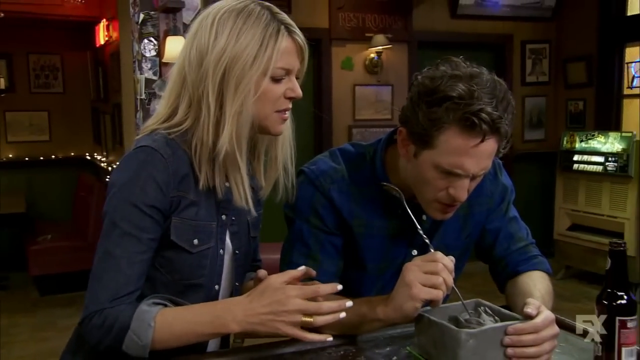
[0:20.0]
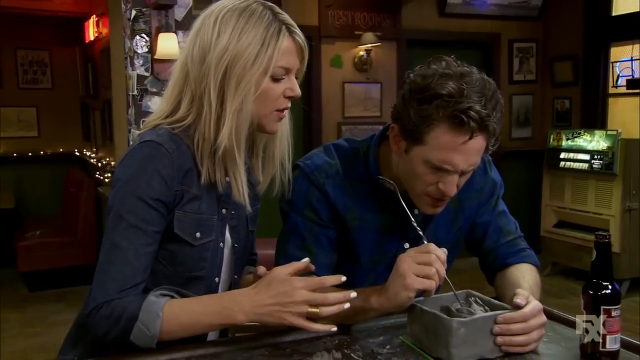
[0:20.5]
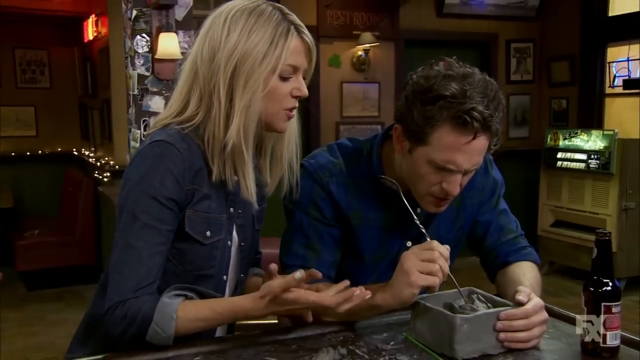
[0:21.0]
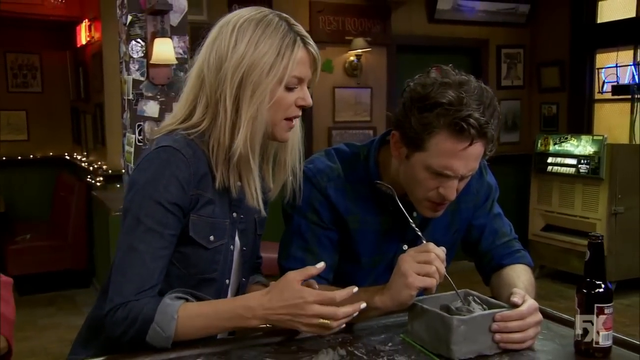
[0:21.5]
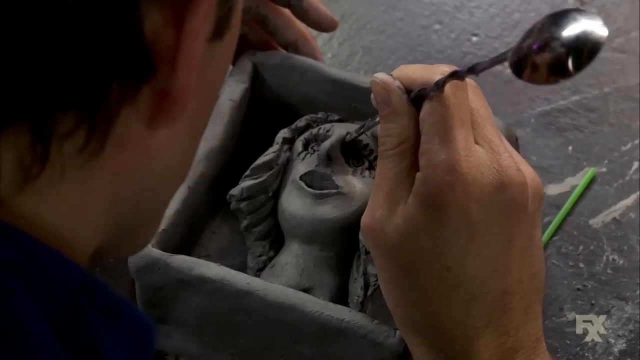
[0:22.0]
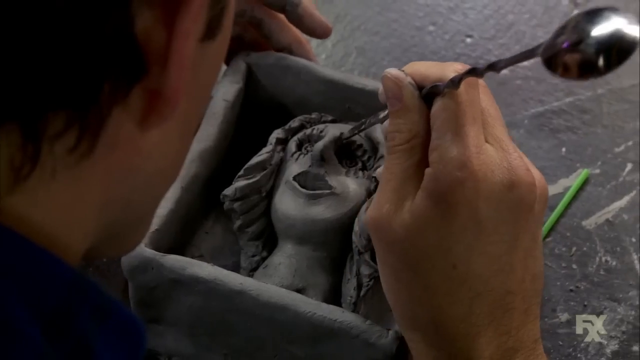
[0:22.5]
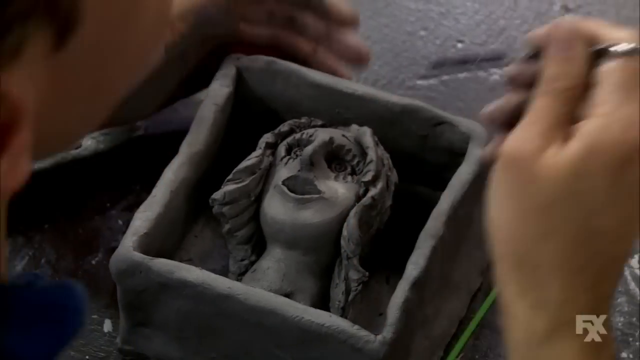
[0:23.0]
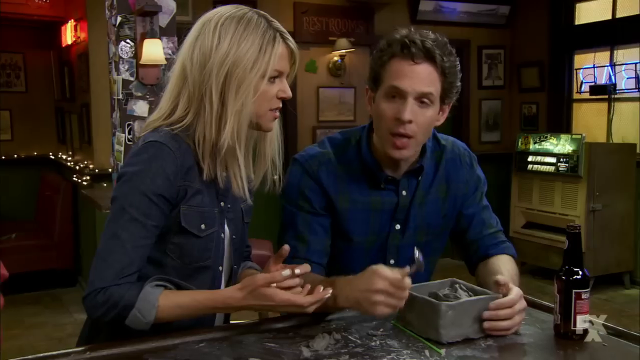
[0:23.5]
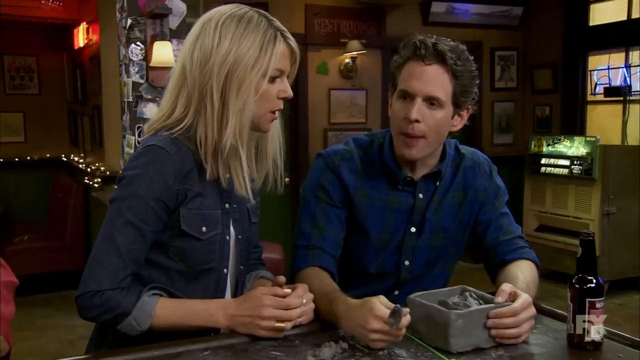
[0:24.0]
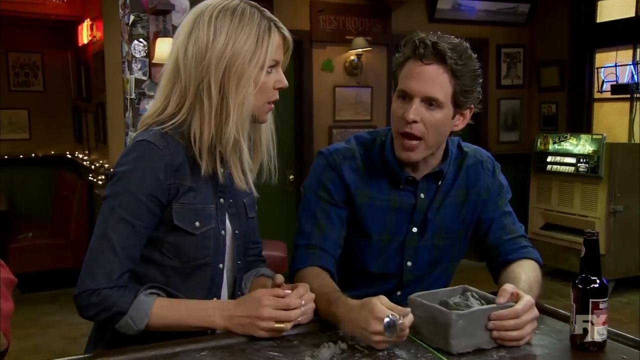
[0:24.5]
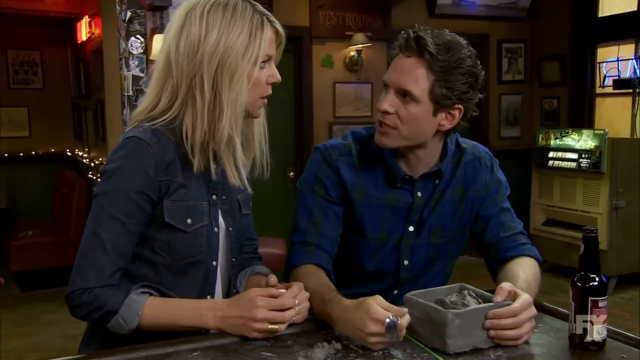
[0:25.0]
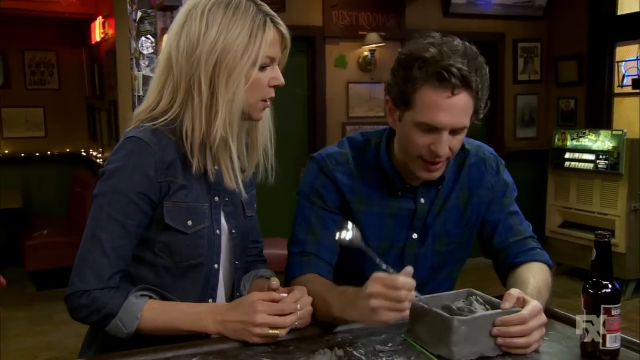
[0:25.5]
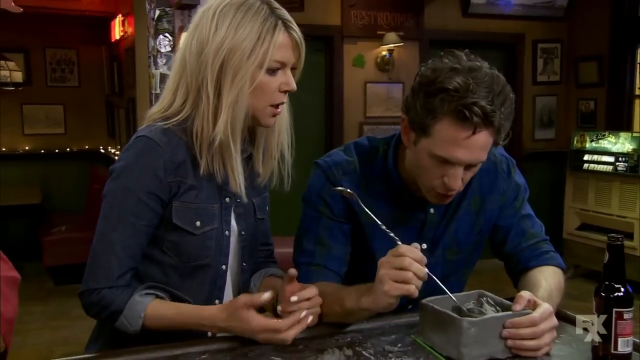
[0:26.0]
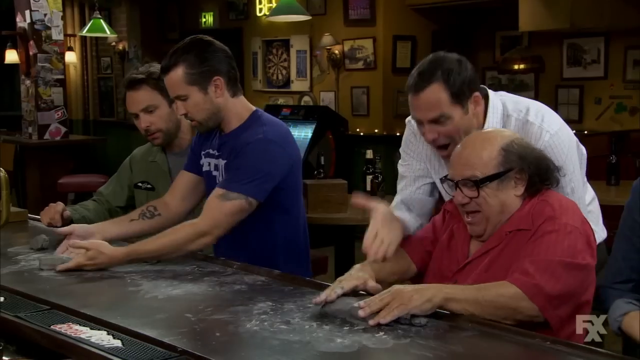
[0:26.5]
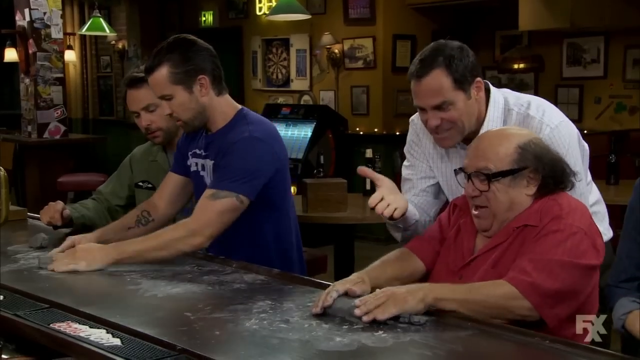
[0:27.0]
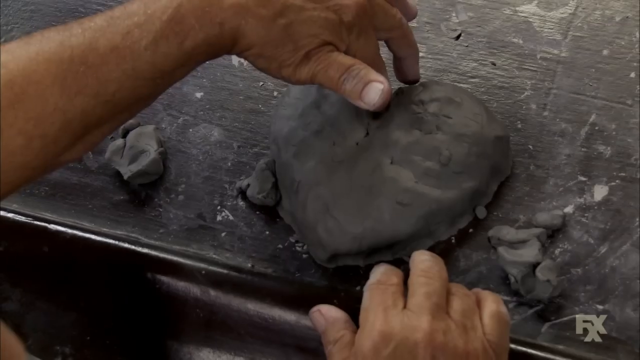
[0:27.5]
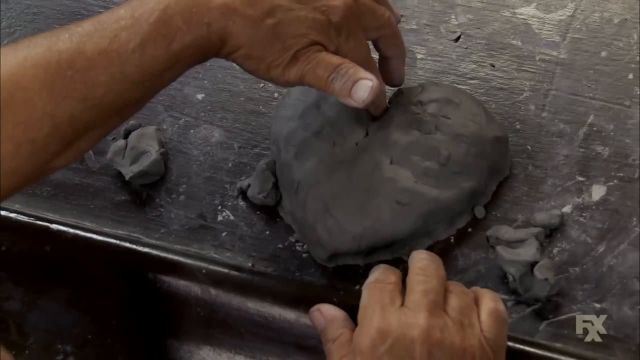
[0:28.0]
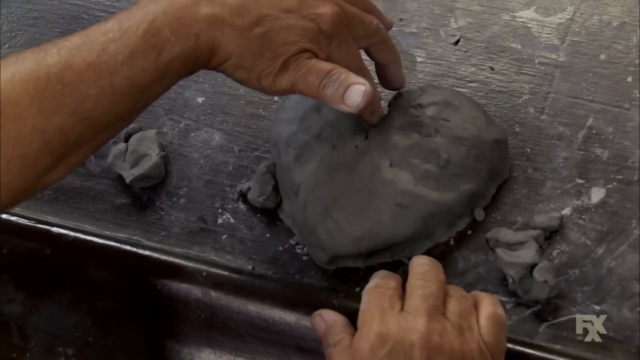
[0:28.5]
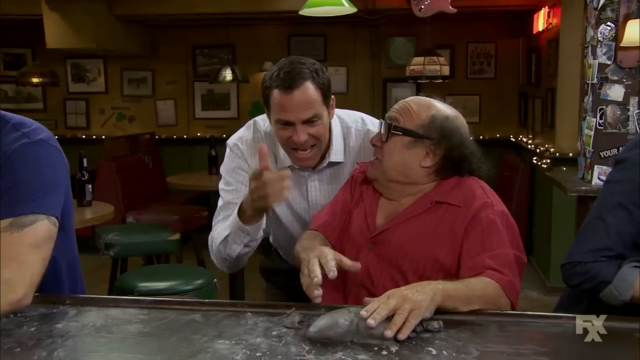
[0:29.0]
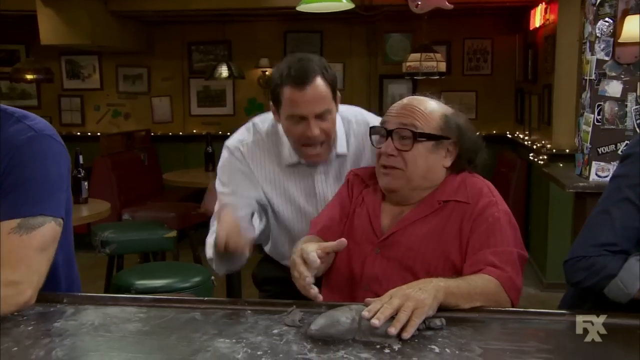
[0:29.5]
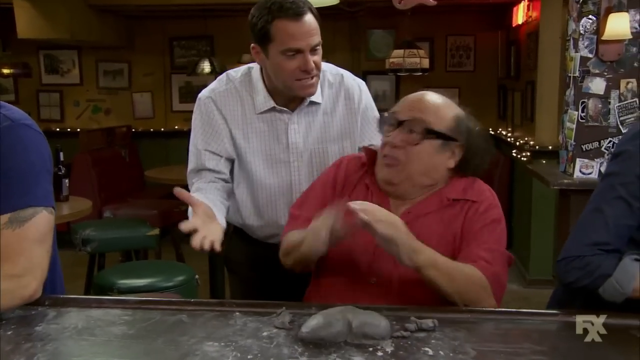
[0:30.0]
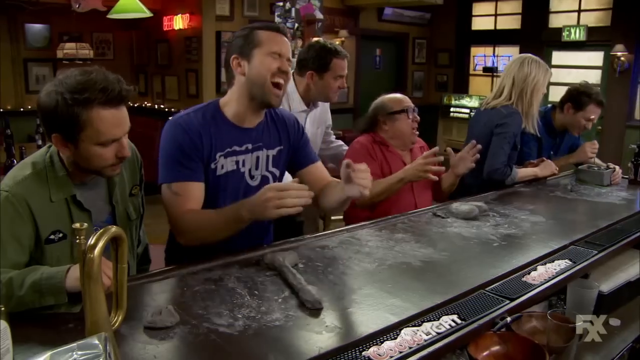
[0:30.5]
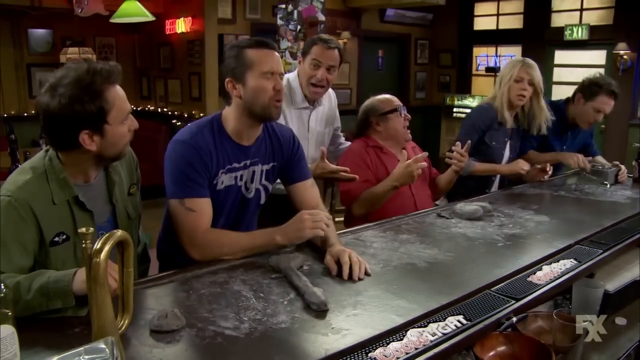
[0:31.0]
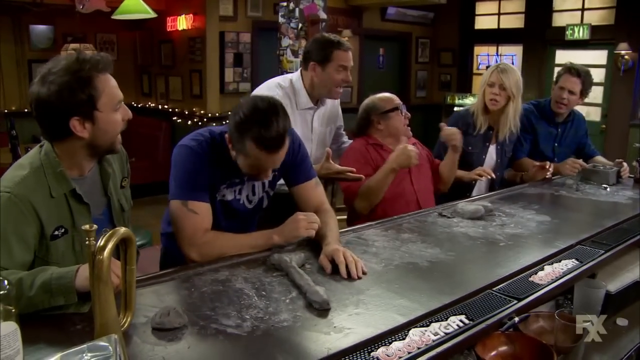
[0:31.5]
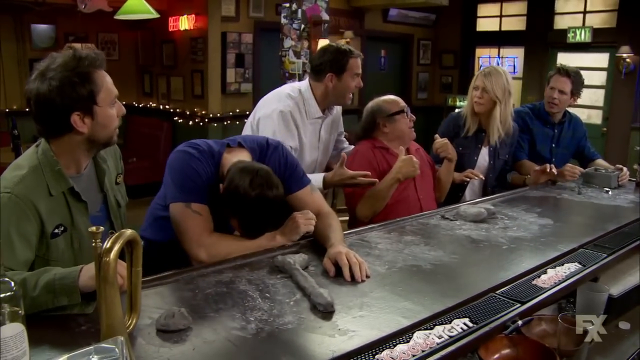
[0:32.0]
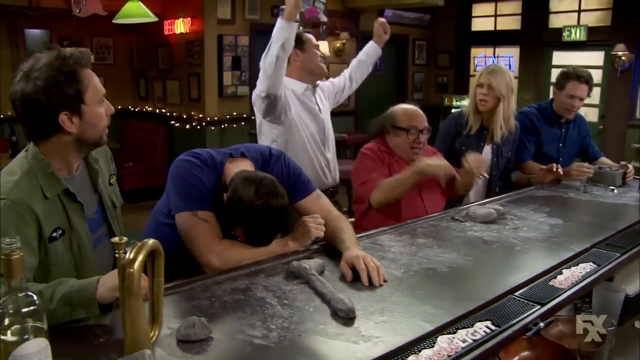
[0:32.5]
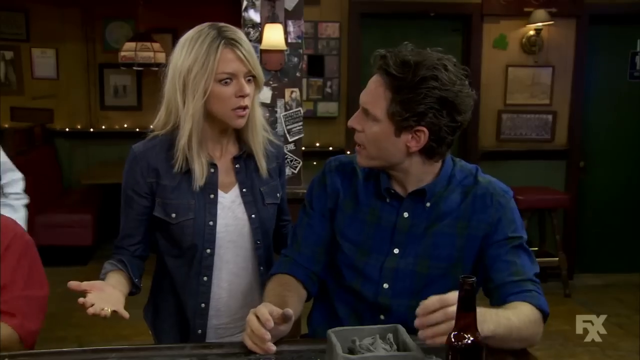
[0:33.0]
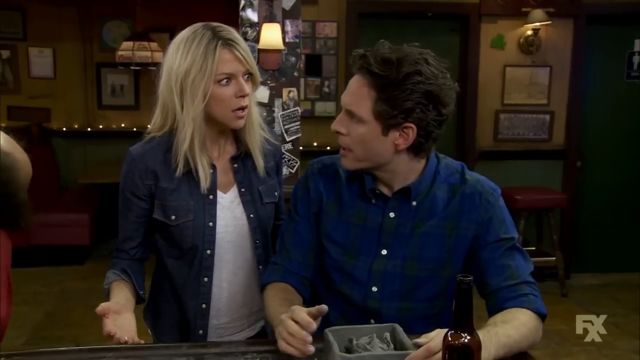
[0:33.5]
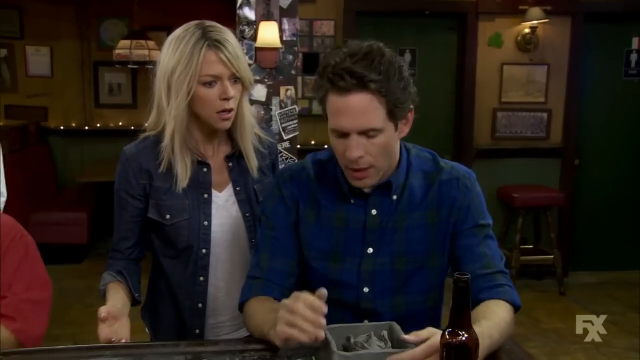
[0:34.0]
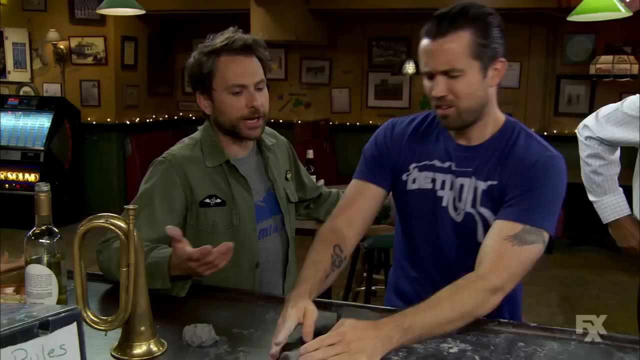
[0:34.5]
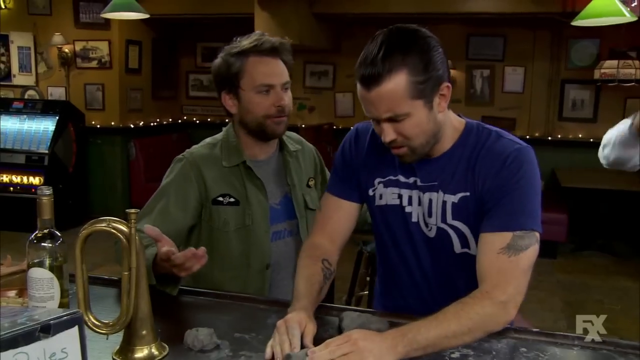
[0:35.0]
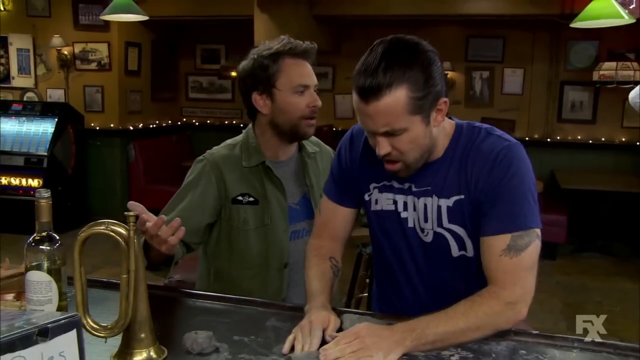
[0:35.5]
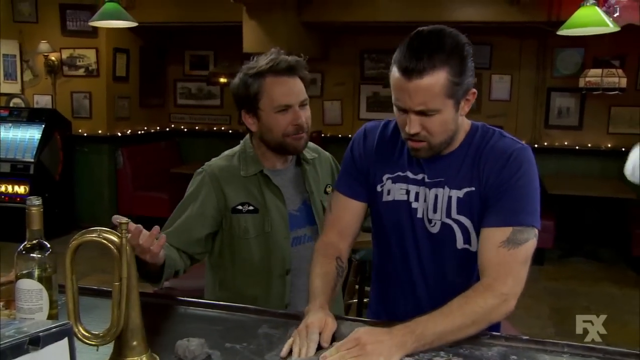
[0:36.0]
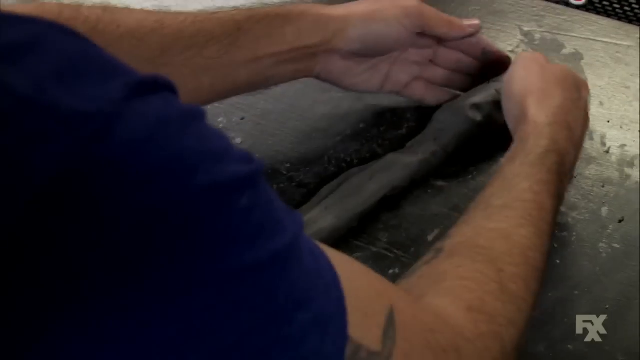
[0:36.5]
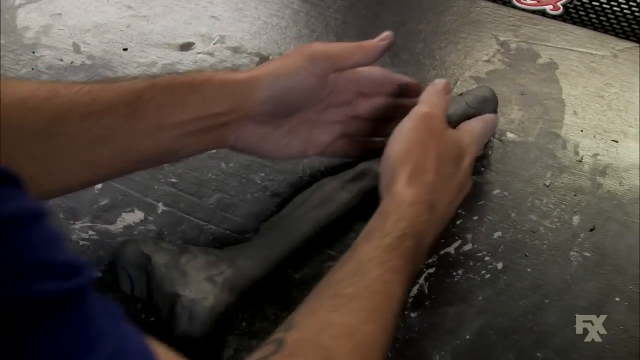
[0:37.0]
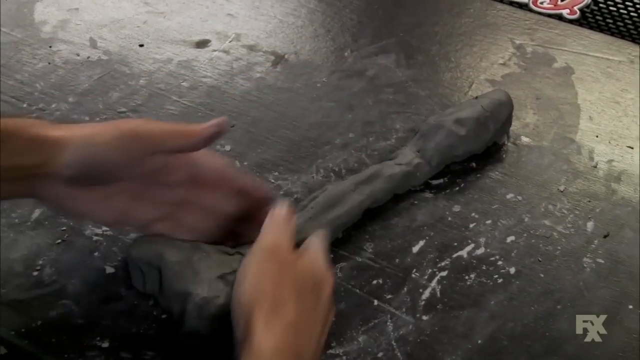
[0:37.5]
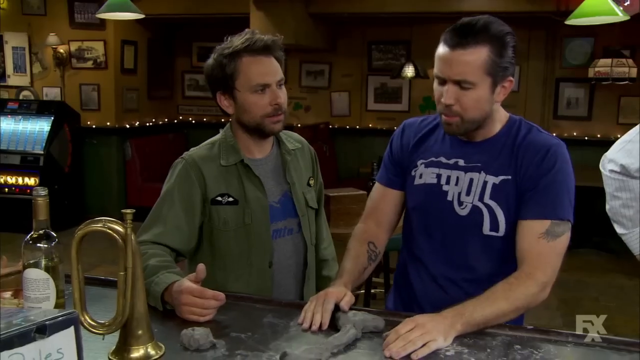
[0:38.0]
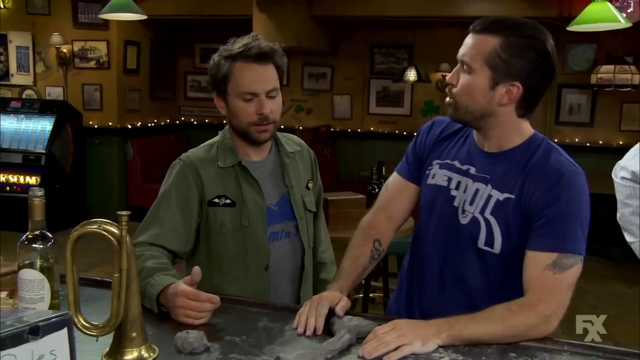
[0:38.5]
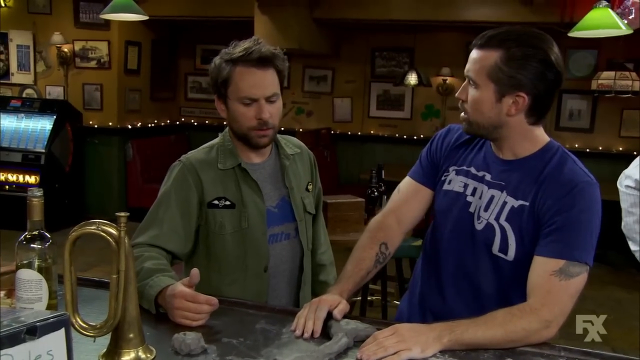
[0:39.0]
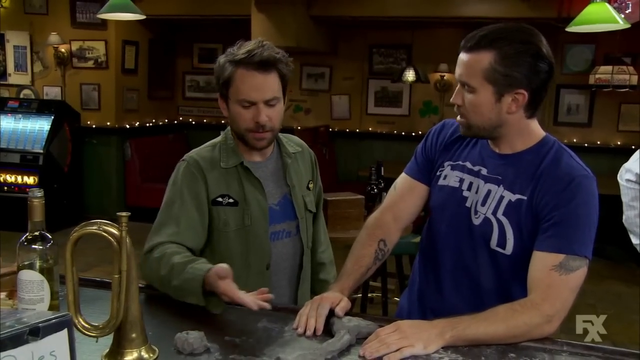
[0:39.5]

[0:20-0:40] A close-up shows the blonde woman in the blue shirt, possibly sitting, next to the brown-haired man in the blue and green shirt. He is making a box out of the gray clay, with a face inside the box. Everyone is excited. The man in the blue T-shirt is making something pornographic with his clay. The man in the blue shirt appears to be making a woman. Danny DeVito appears to be making a heart. What the man in the green jacket is making cannot be seen, but he seems to be asking the man in the blue T-shirt about the clay he is forming. Danny DeVito and everyone else then seem riled up, and there seems to be a big stir. The man in the blue T-shirt cannot stop touching his clay.